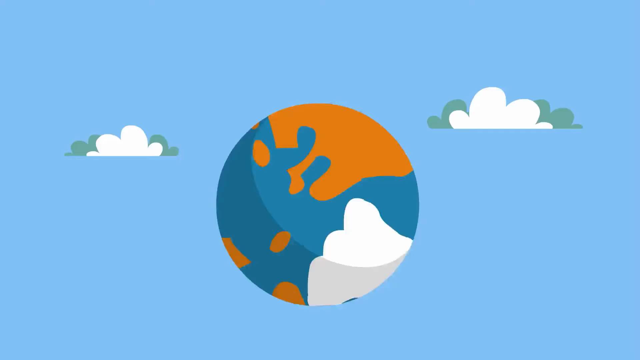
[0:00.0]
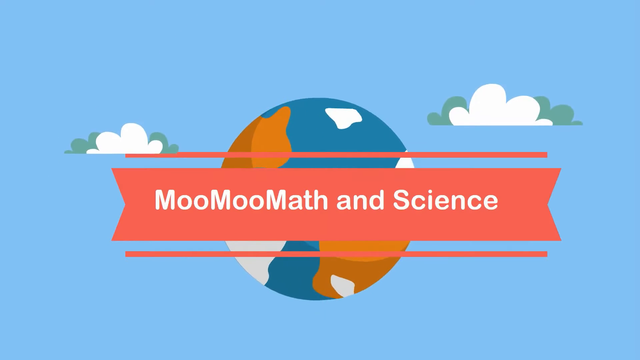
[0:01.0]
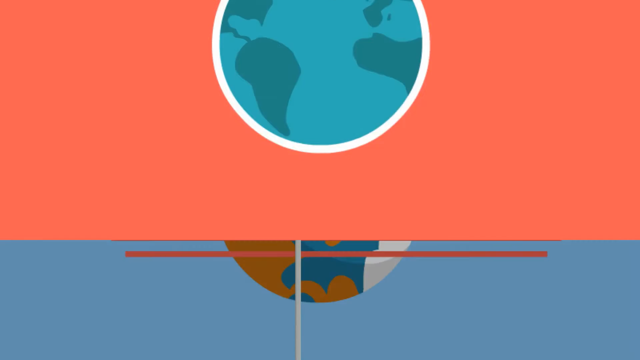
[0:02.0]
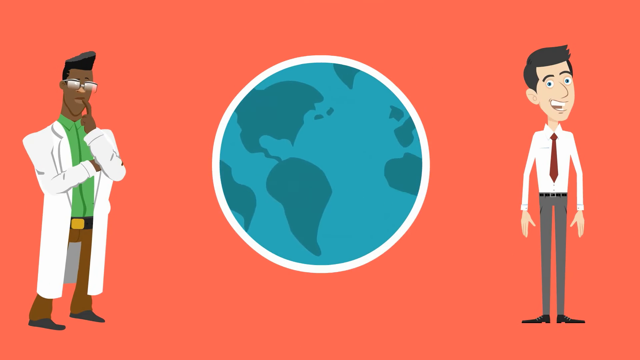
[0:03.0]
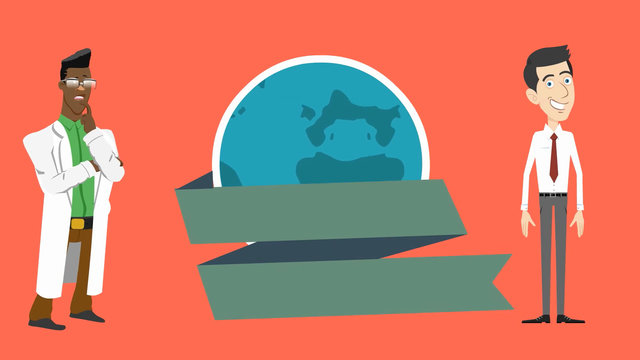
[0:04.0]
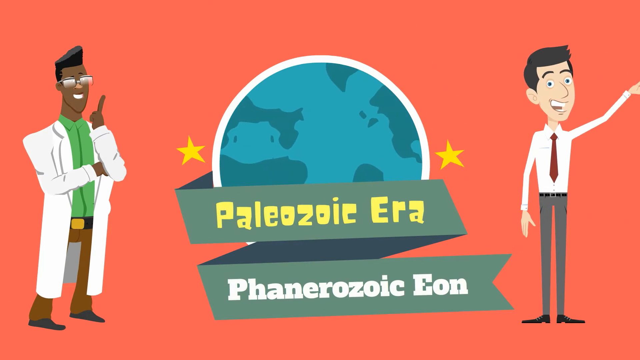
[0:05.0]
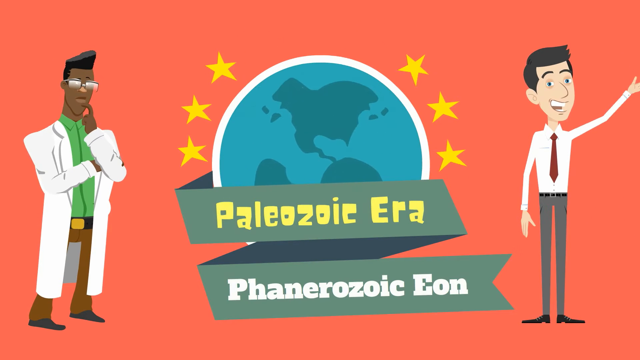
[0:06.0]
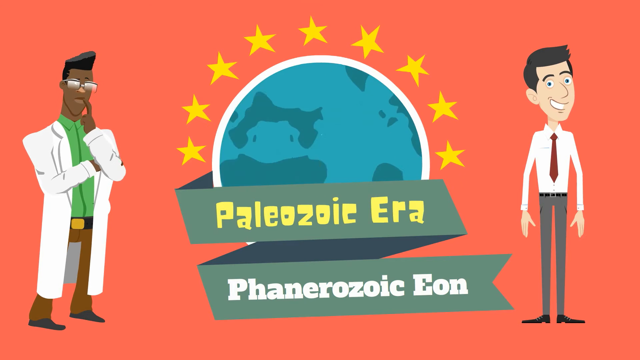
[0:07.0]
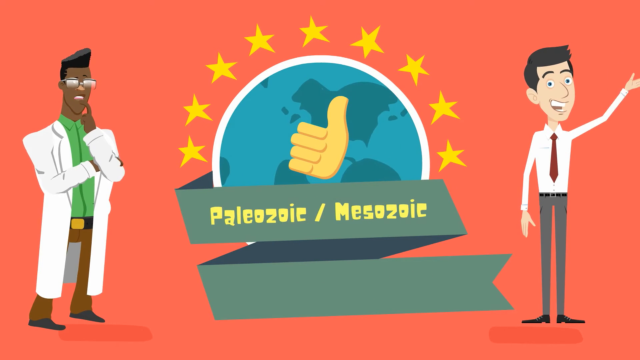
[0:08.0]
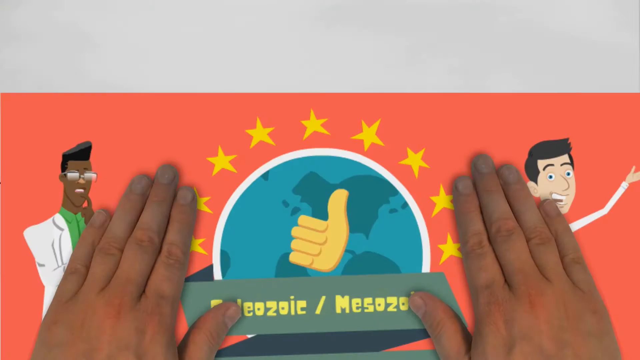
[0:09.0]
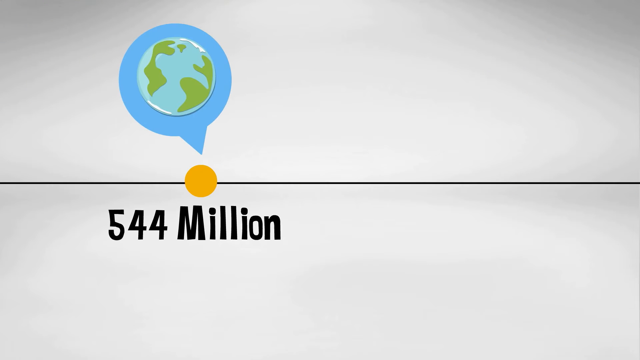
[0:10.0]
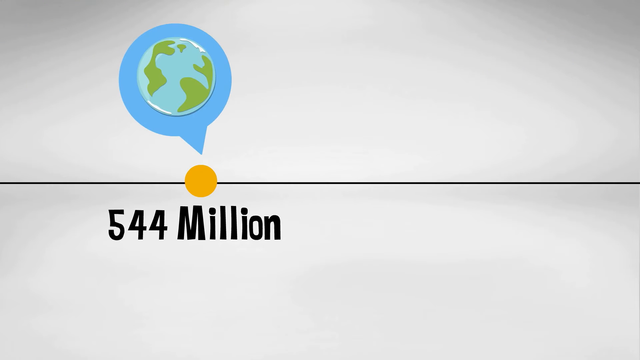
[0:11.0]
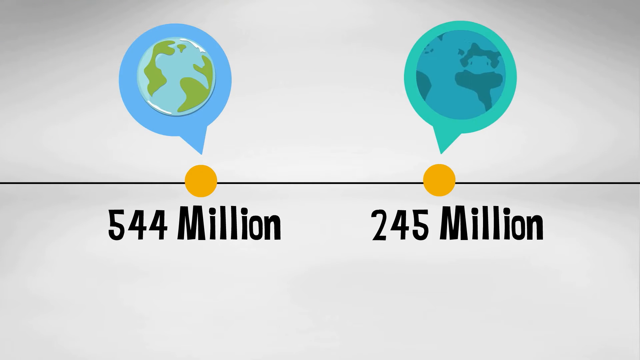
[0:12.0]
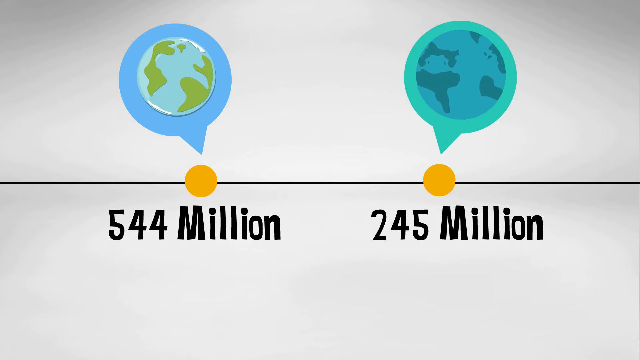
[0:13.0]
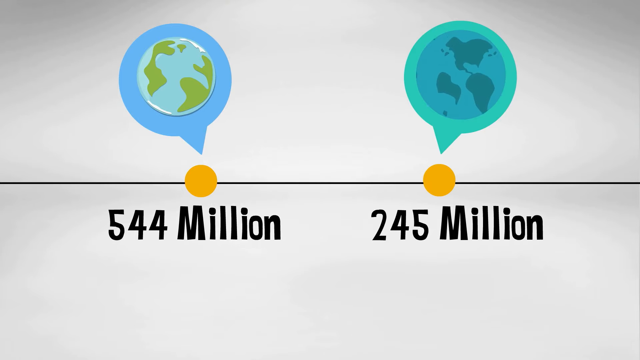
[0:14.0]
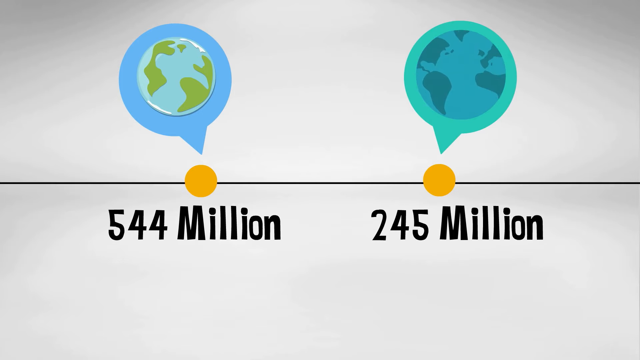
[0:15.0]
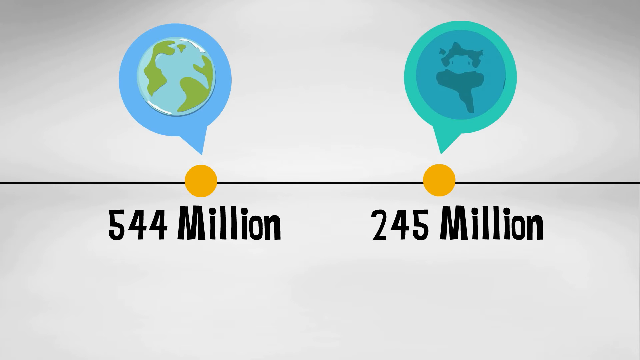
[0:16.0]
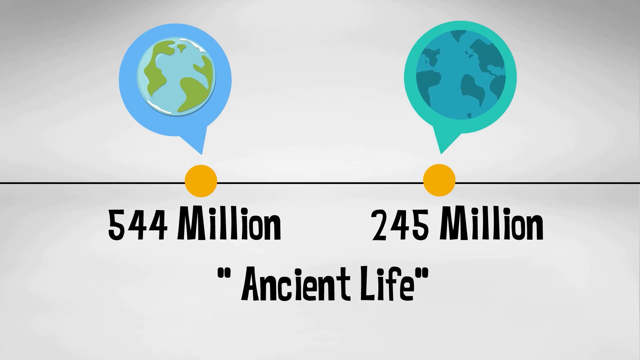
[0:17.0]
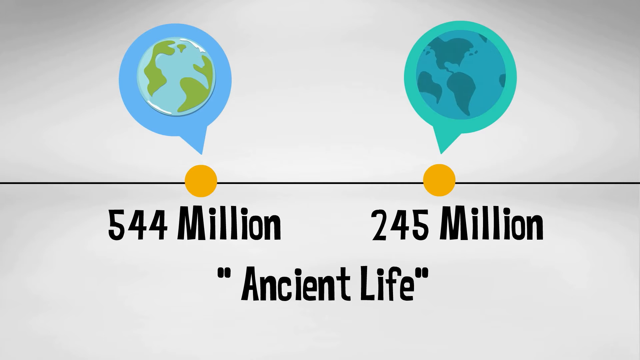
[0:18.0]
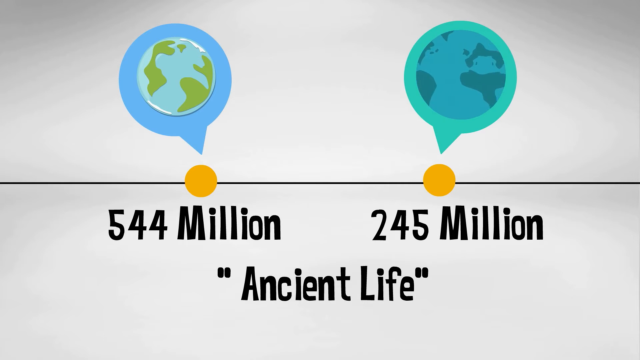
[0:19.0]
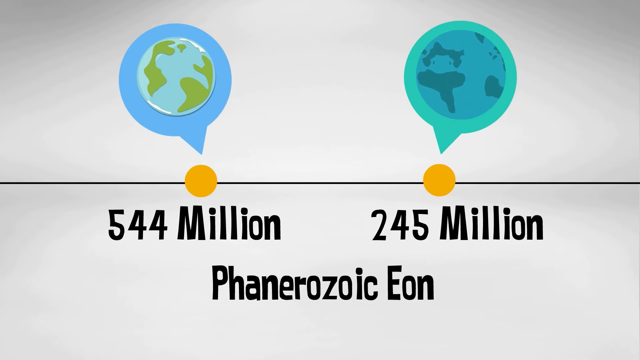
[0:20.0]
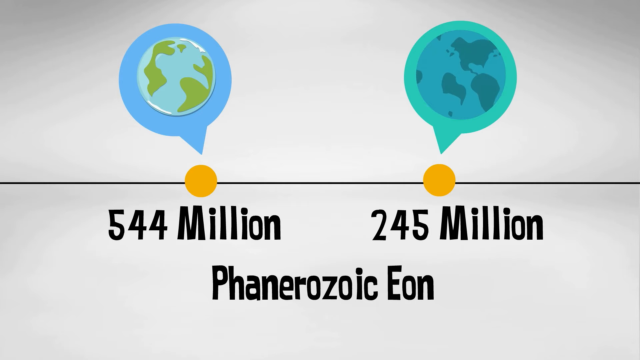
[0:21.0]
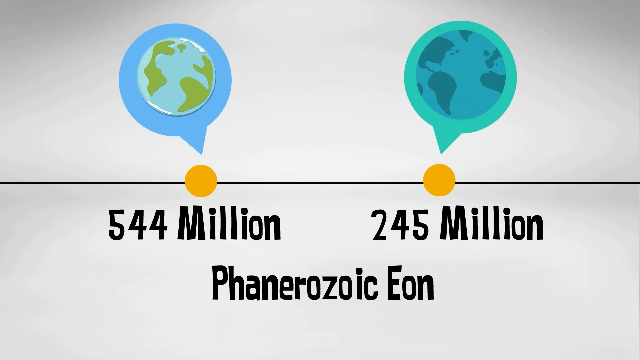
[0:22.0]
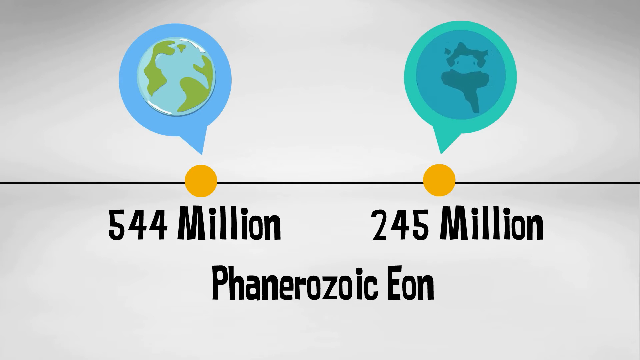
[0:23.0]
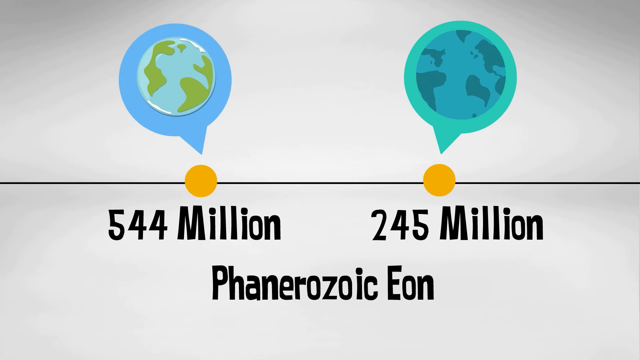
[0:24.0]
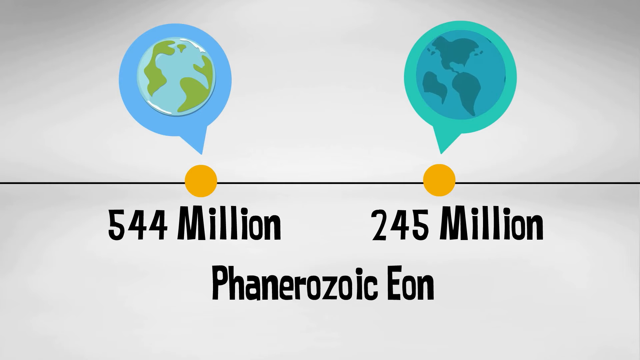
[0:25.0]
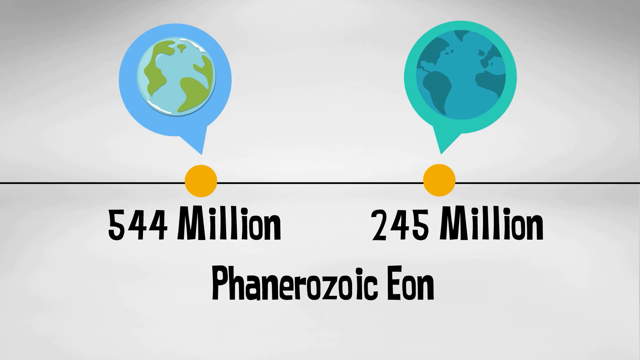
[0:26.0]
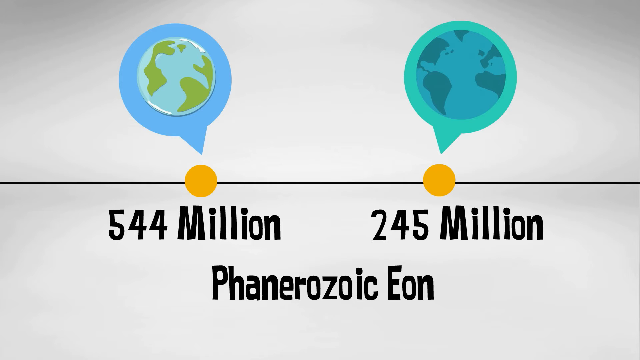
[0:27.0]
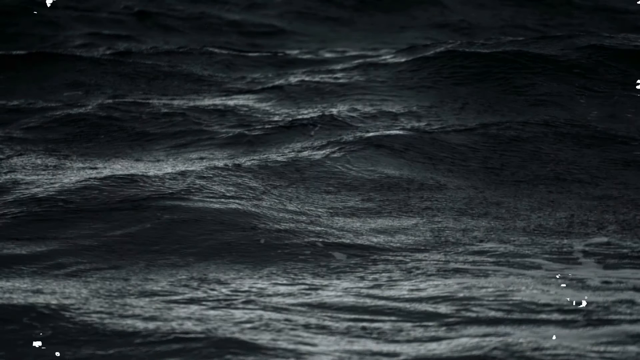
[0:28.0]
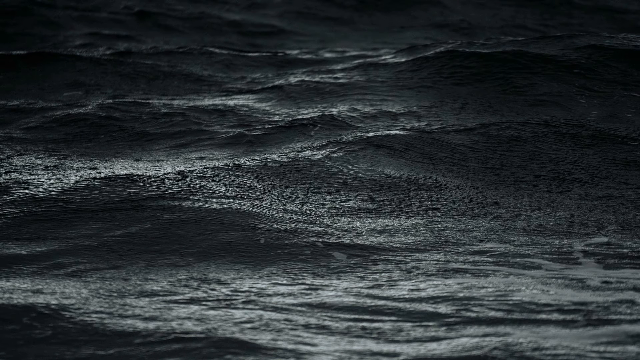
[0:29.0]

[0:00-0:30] What looks like a sky blue background appears with what looks like a white cloud and two green items, one on one side and a larger one on the other side. In the middle is what looks like a big circle, a big moon, with colors ranging from blue to white to orange. A rock comes down and a hand grabs it. Then a red background fills the screen, followed by a circle with a white lining and blue on the inside, with a sky blue and navy blue design inside it. A white cartoon character with black hair, wearing a white shirt, red tie, gray trousers and a belt, stretches his hand and makes a gesture. On the other side is a Black man with black hair, wearing glasses, a green shirt and a white lab coat, holding his hand on his mouth. Next, "Phanerozoic" appears and turns up, and the numbers "554 million" on one side and "254 million" on the other appear, with "ancient life" beneath them. Then "Phanerozoic eon" appears in purple. After that comes what looks like a dark sky.